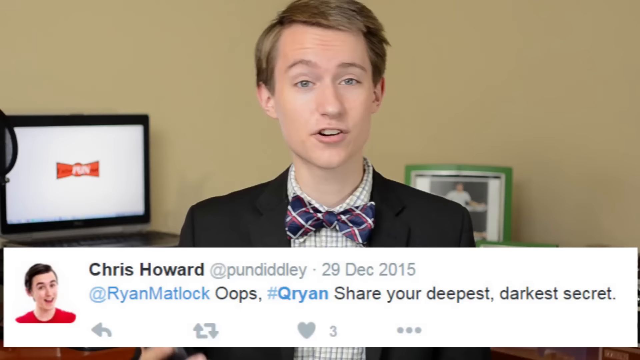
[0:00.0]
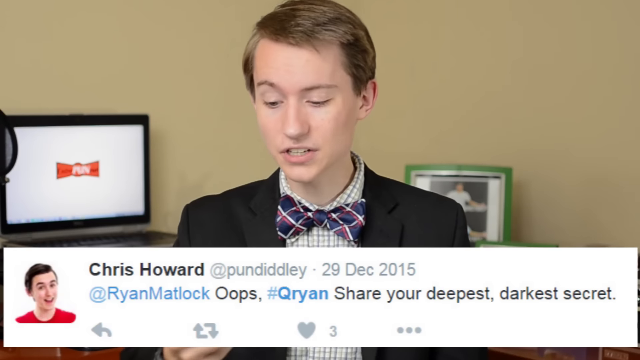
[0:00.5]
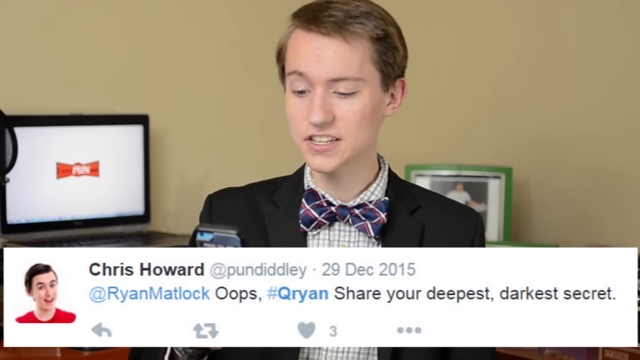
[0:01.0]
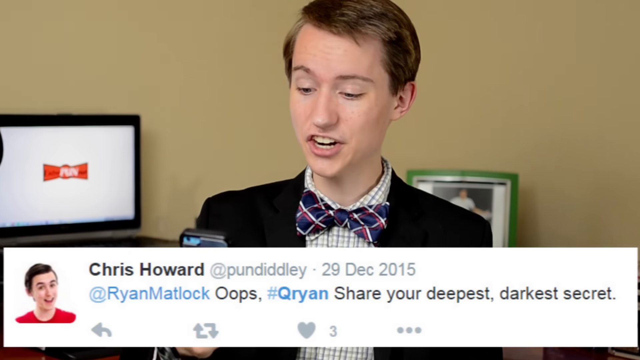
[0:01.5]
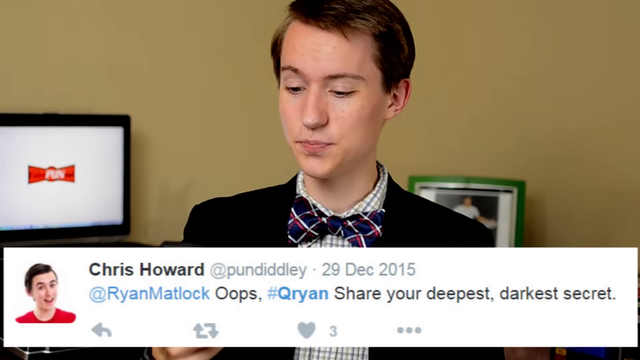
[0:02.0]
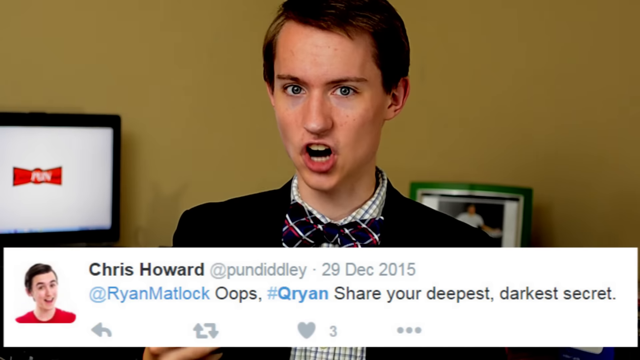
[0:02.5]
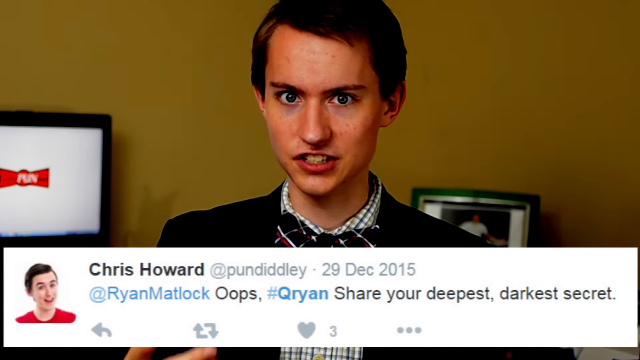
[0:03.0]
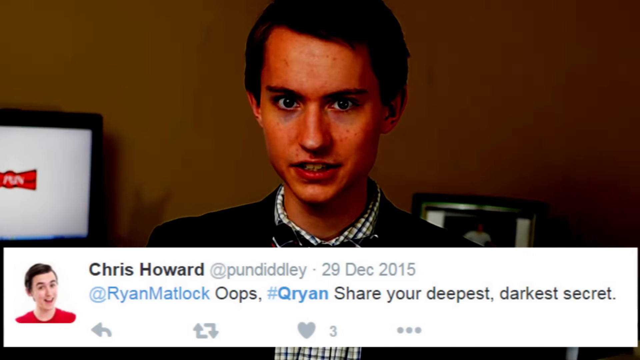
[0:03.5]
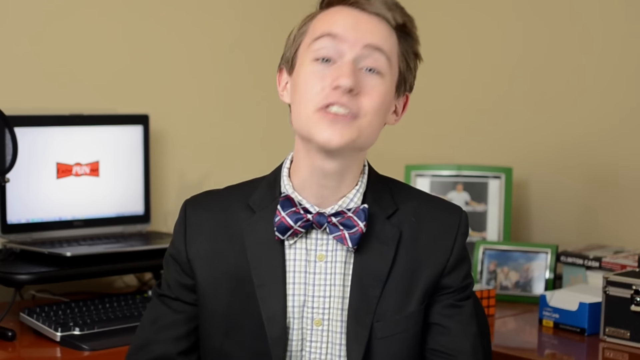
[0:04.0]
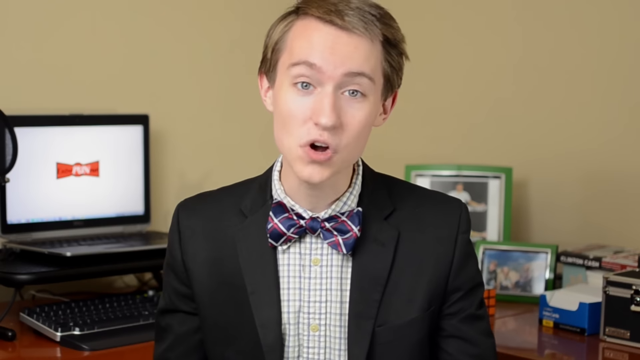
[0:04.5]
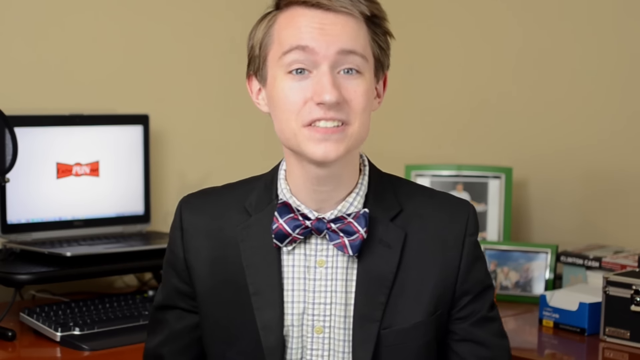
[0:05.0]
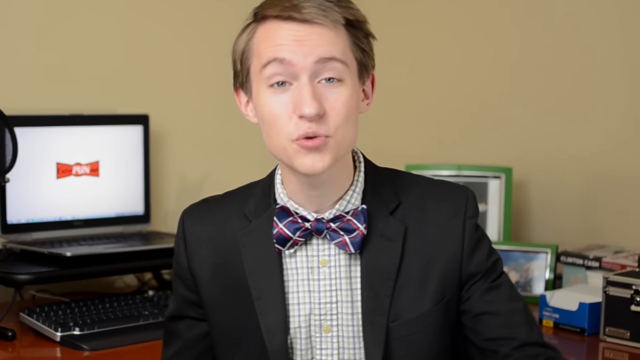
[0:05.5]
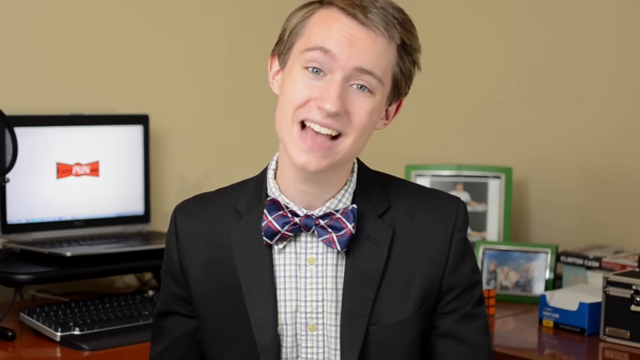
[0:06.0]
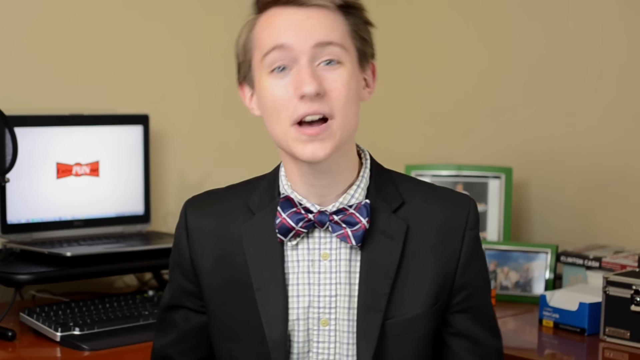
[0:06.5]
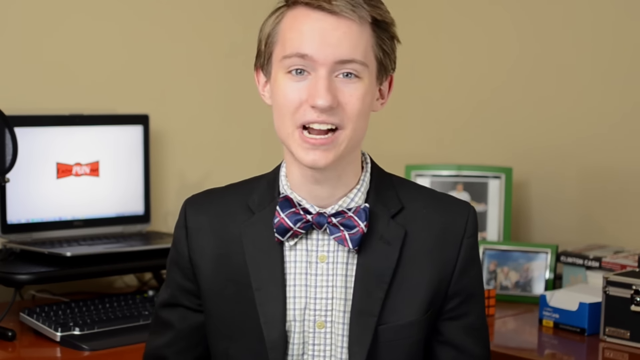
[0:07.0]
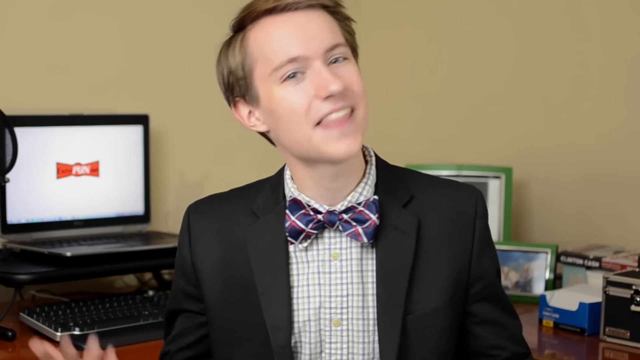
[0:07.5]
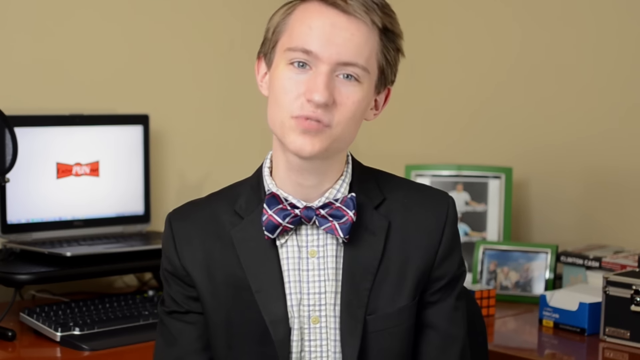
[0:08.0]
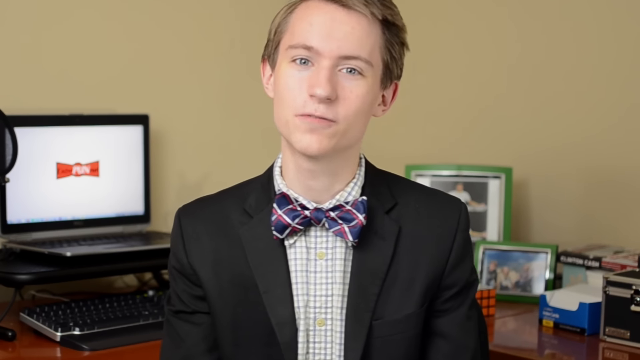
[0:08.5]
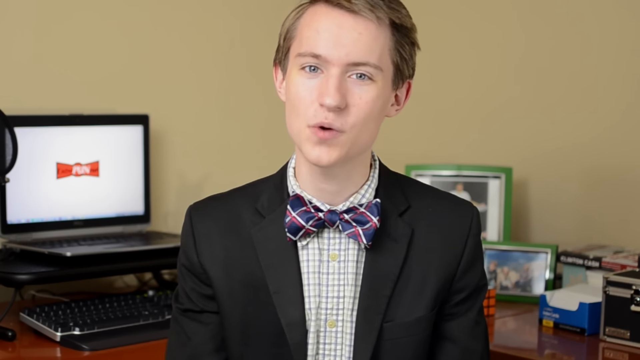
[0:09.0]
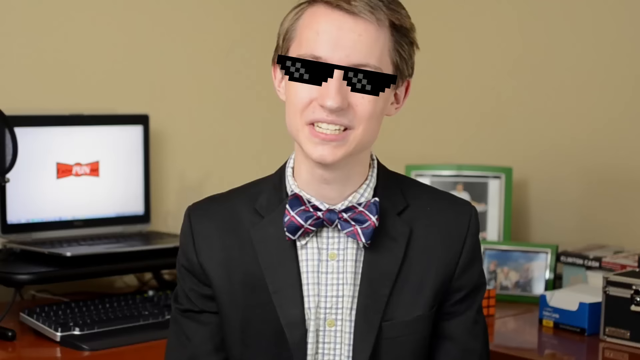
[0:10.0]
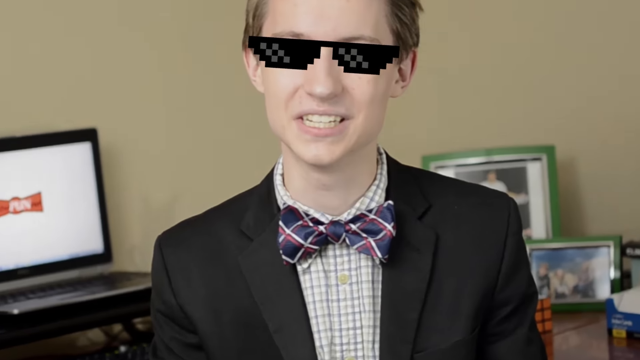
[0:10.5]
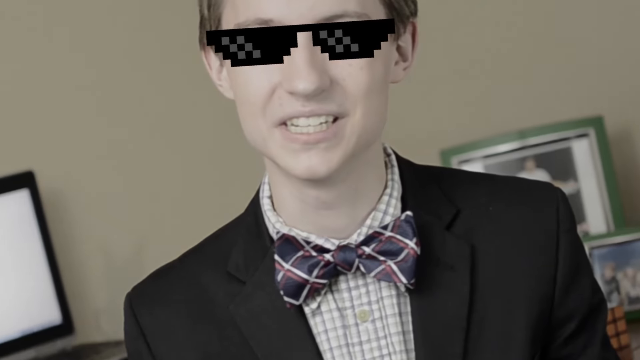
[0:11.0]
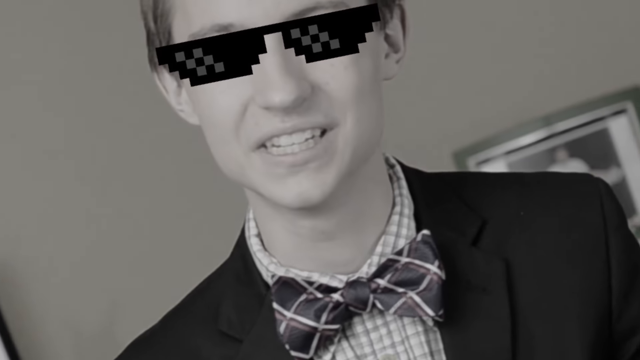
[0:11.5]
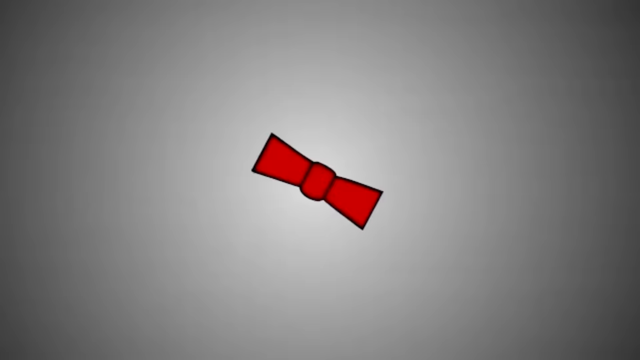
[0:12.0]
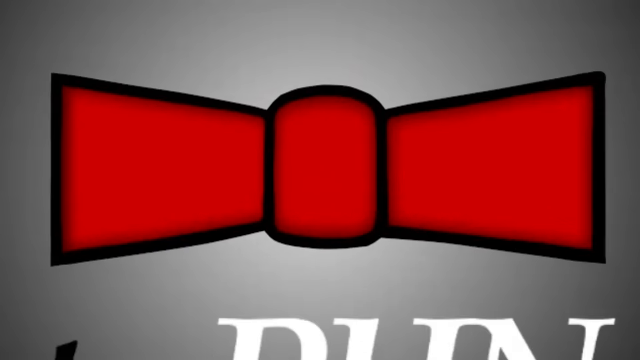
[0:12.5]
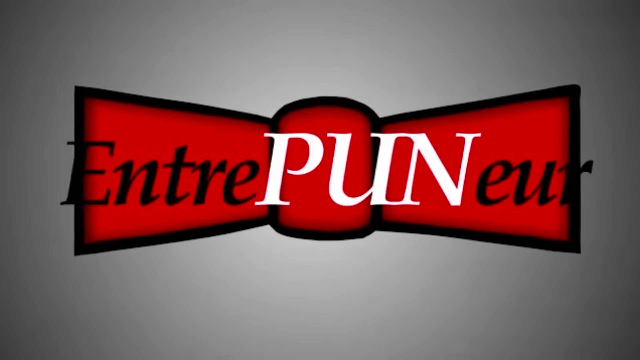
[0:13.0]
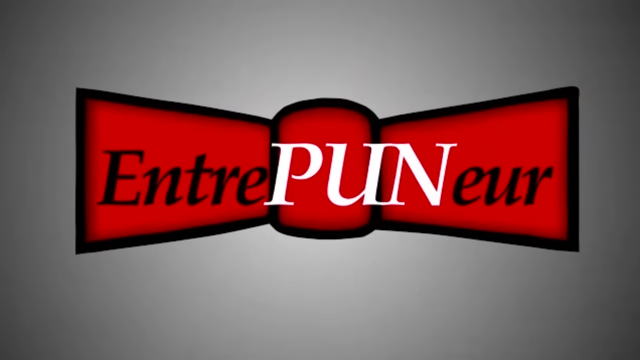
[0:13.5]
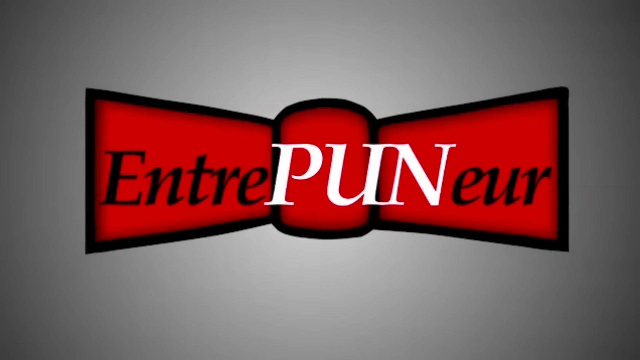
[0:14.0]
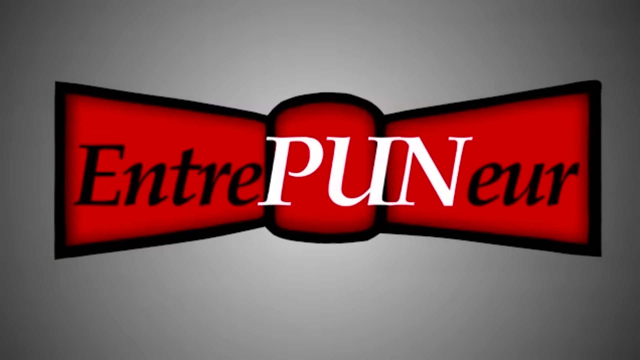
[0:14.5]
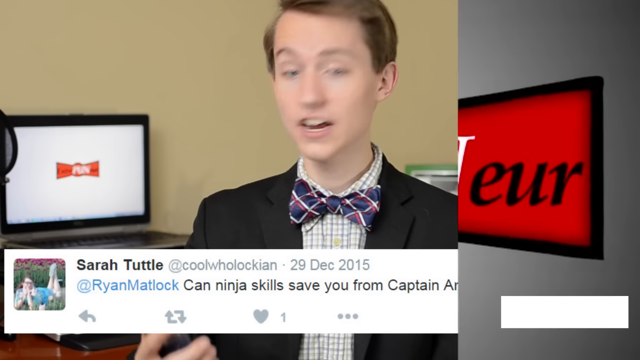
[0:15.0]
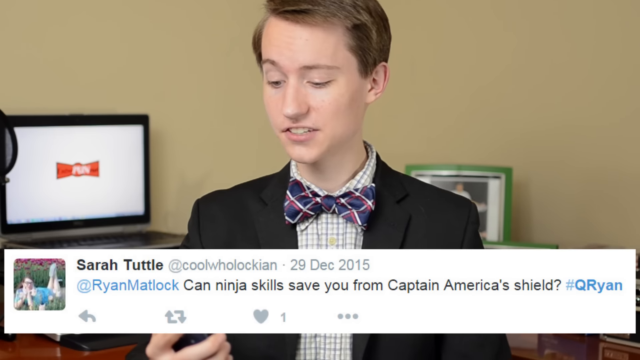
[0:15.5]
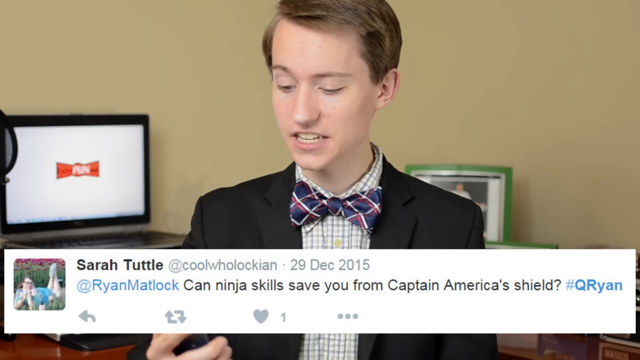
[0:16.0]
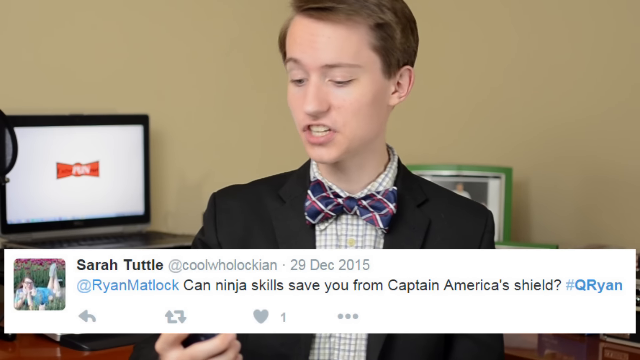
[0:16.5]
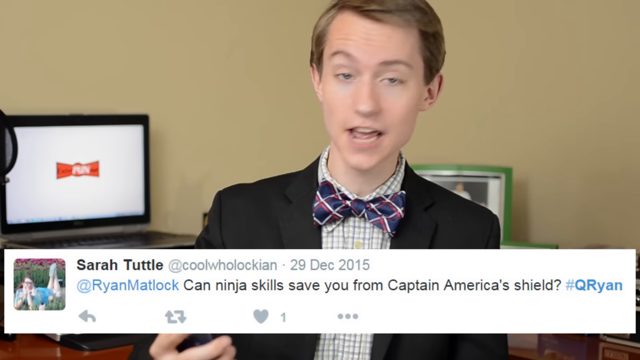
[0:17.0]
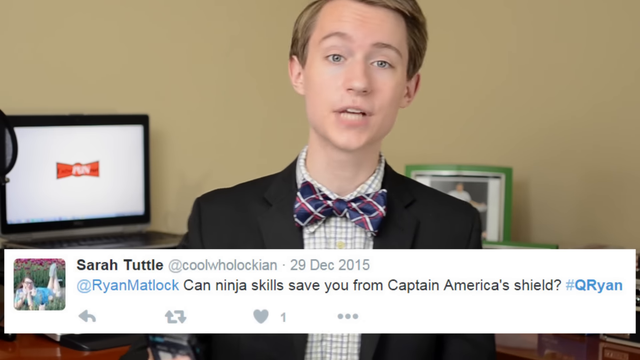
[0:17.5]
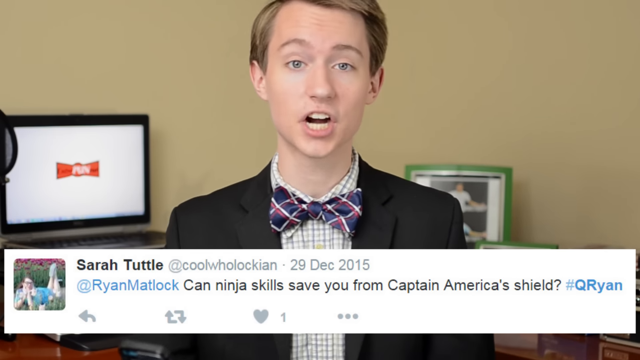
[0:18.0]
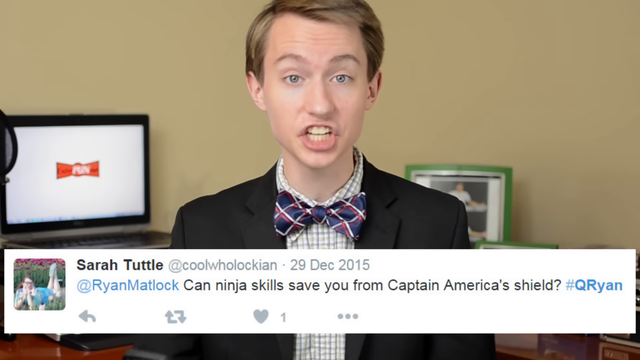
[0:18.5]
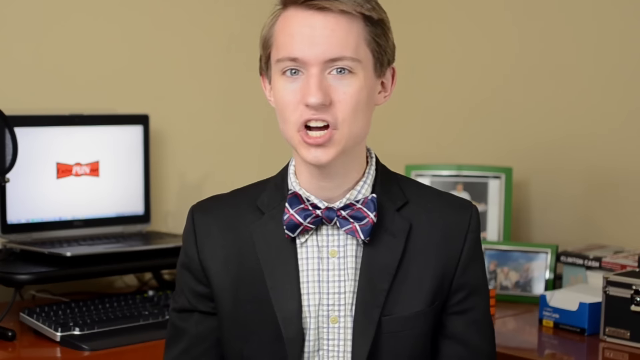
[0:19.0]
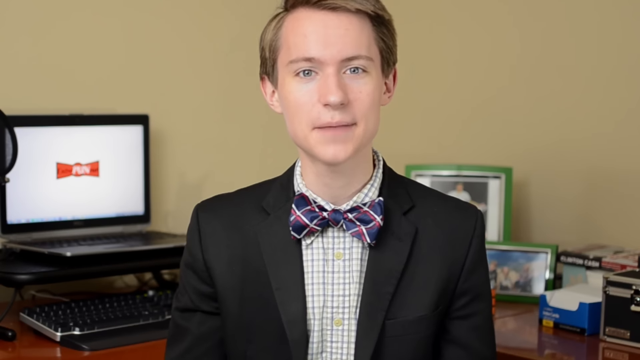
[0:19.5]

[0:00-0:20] A single young man with a white skin tone, maybe in his early twenties, with short brown hair, is in the middle of the frame in a bedroom-like setting. He wears a black suit jacket, a white shirt with black checkers on the front, and a dark blue bow tie with white and red stripes. The wall behind him is beige; behind him to the left is a TV or monitor, like a laptop, that is turned on and showing a very bright white screen, and directly behind him is what appears to be a portrait in a green frame. A white rectangle at the bottom of the frame appears to be a Twitter post from the user Chris Howard, addressed to @Ryan Matlock, reading "#QRYAN share your deepest darkest secrets". The man looks downward to the left at his phone as the image gets darker and more contrasty. The view then returns to the man speaking to the camera, more of the room behind him becomes visible, and the rectangle at the bottom disappears. Another portrait is on the right side. In an animation, a pair of glasses comes in from the top right toward the left and lands on his face. The scene changes to a gray background with a red bow tie in the middle and the name "EntrePUNeur". The video then returns to the young man in the bedroom, with another tweet displayed at the bottom.